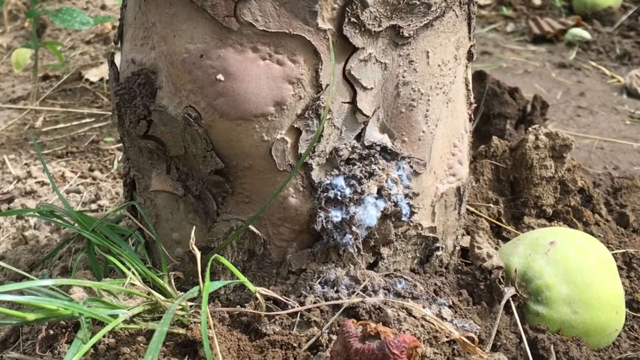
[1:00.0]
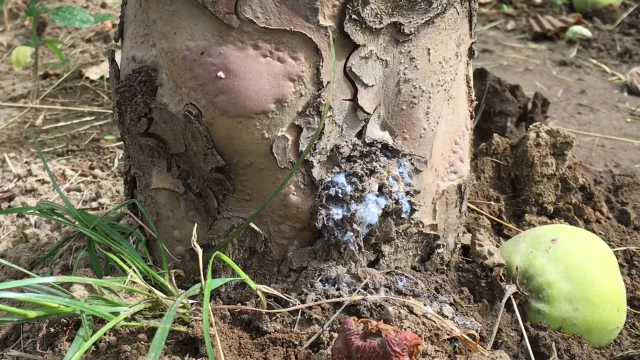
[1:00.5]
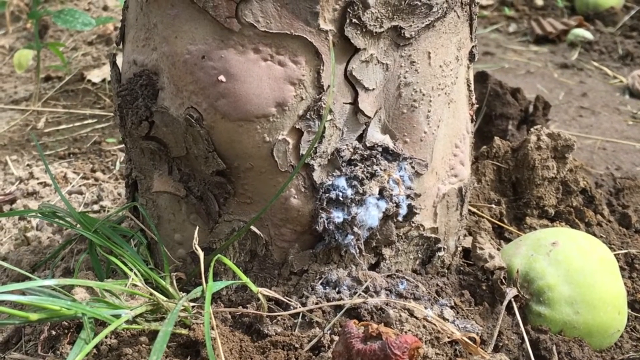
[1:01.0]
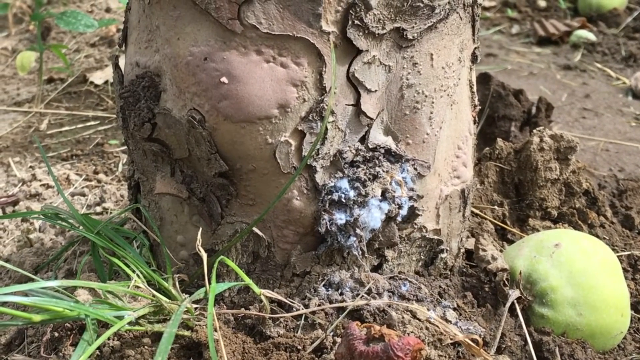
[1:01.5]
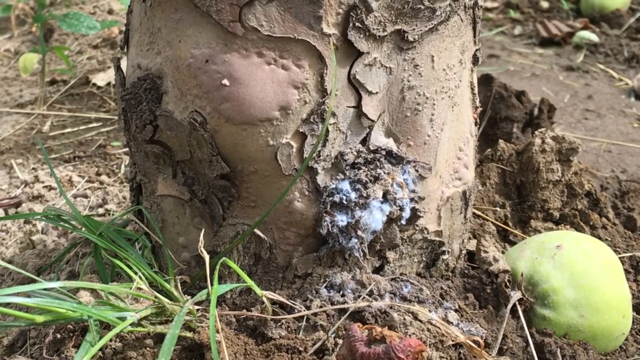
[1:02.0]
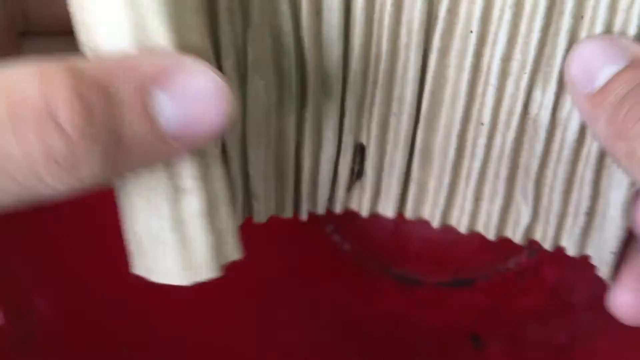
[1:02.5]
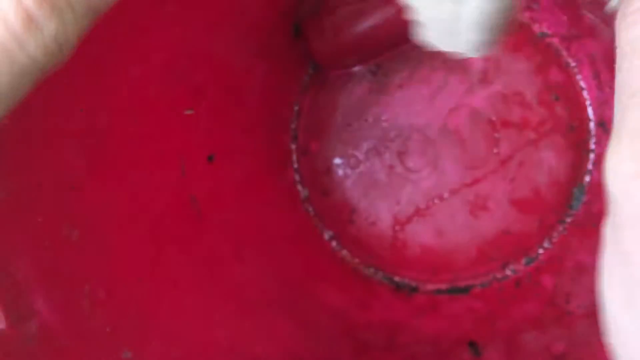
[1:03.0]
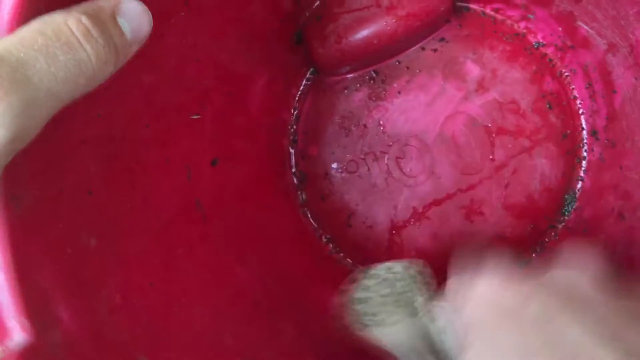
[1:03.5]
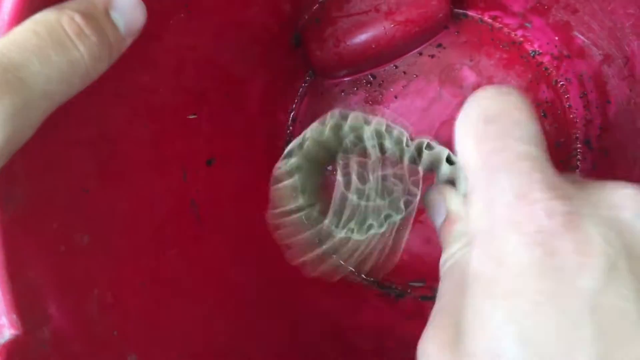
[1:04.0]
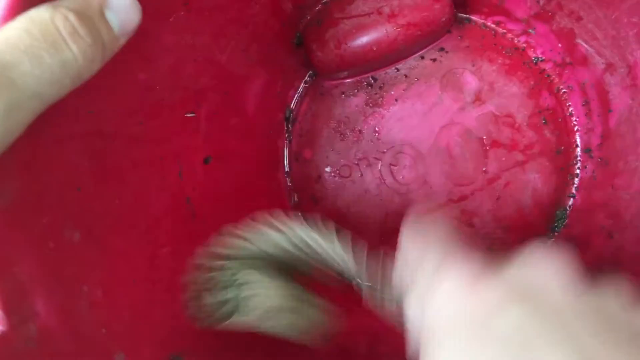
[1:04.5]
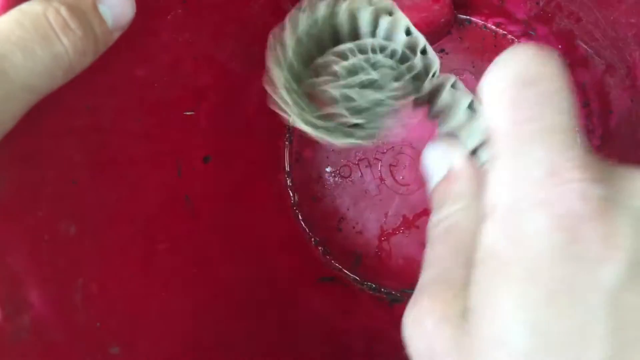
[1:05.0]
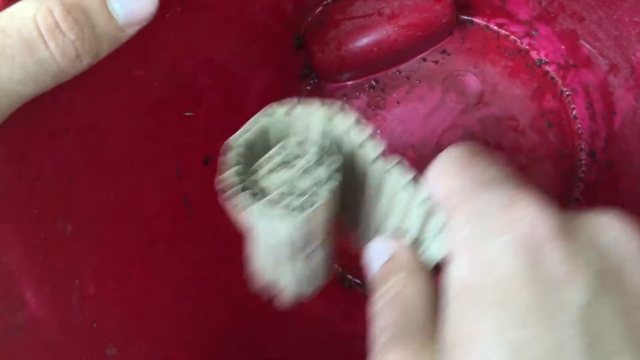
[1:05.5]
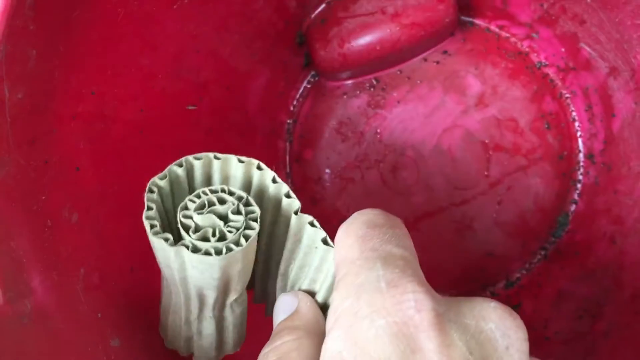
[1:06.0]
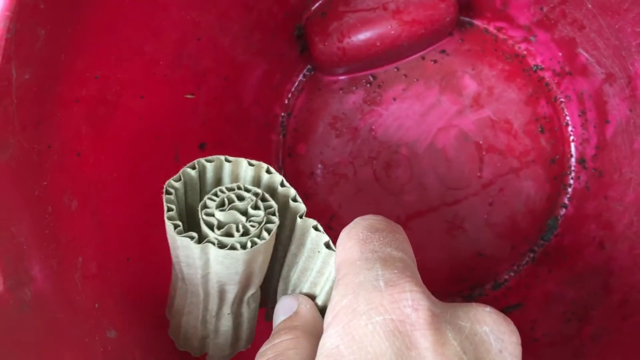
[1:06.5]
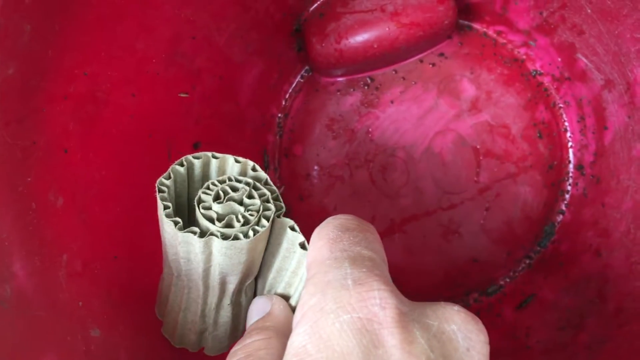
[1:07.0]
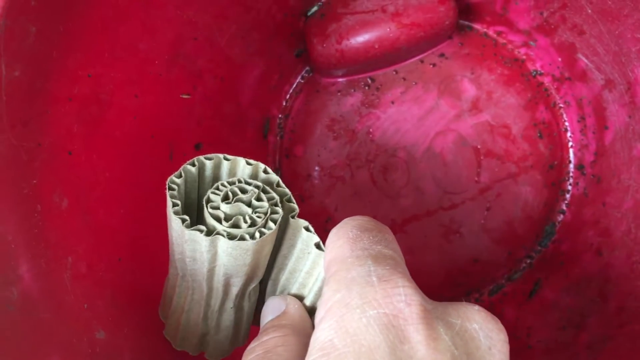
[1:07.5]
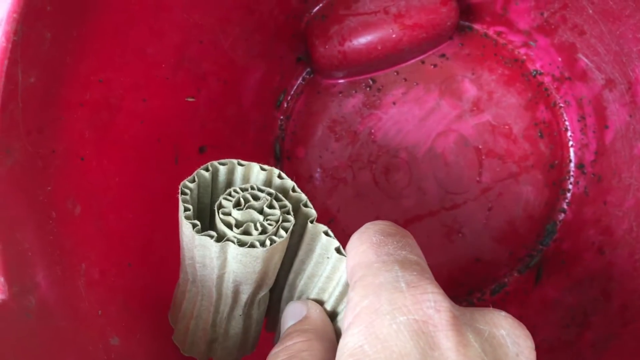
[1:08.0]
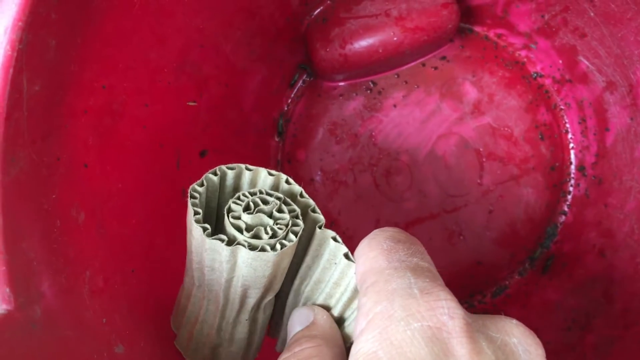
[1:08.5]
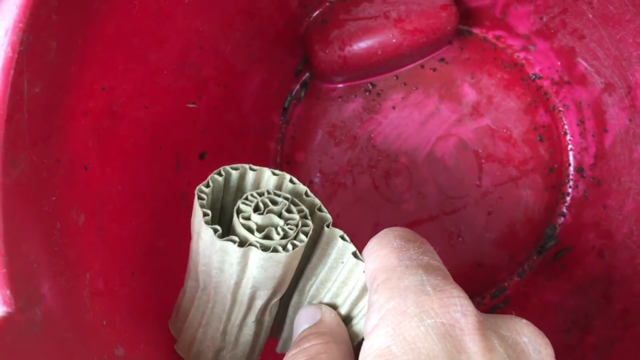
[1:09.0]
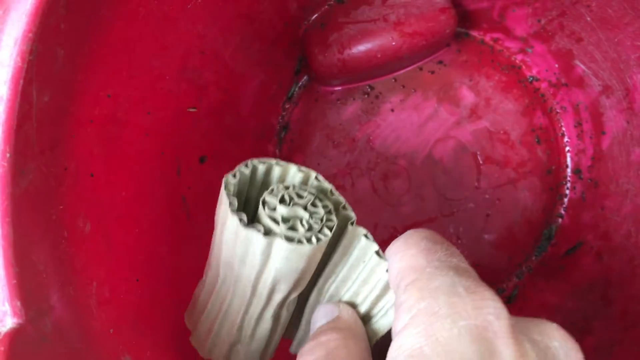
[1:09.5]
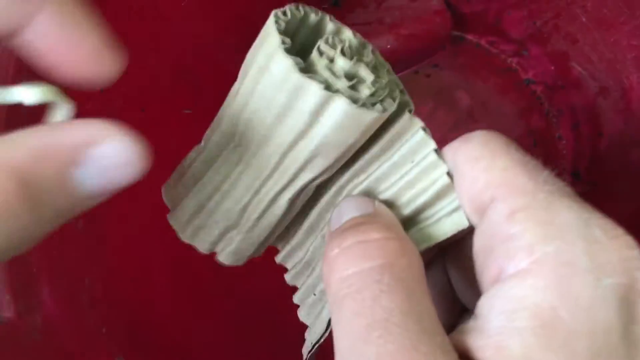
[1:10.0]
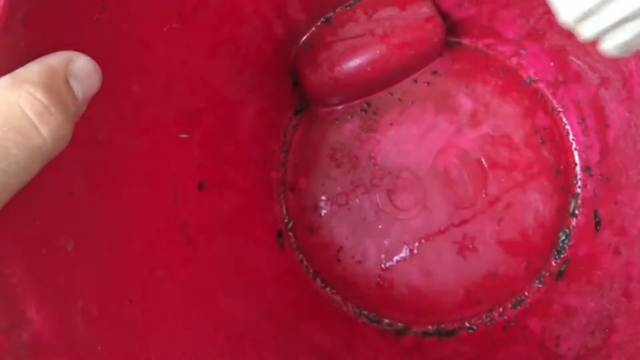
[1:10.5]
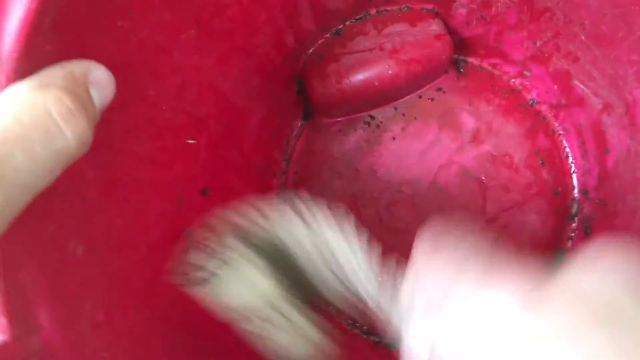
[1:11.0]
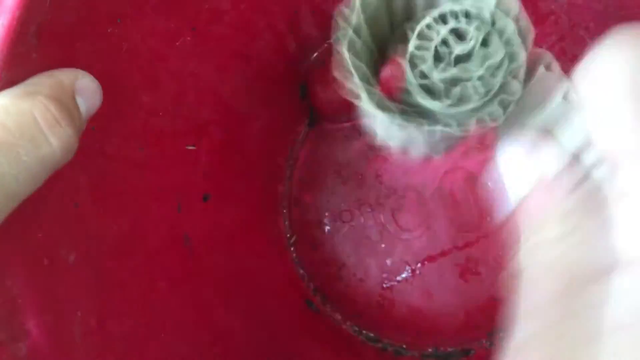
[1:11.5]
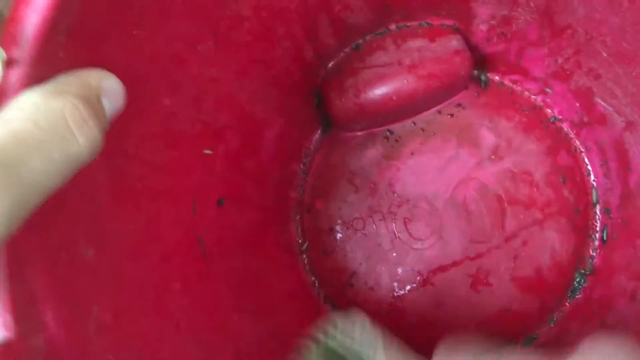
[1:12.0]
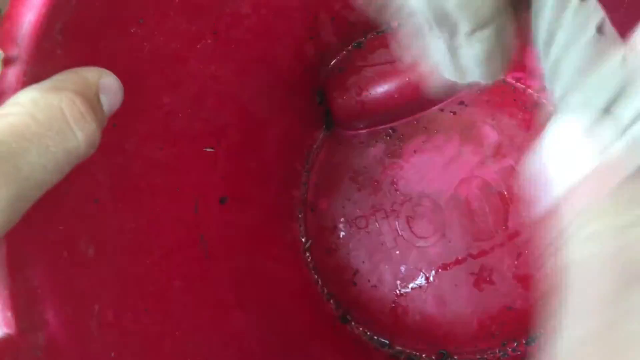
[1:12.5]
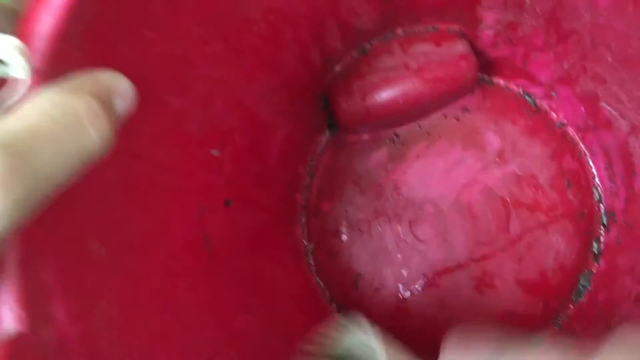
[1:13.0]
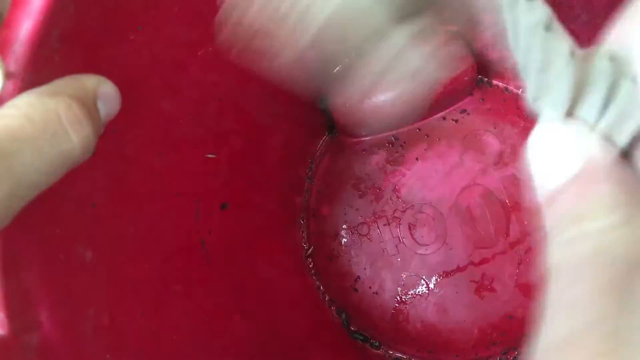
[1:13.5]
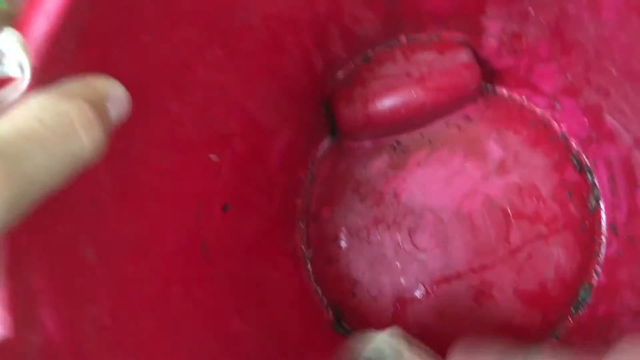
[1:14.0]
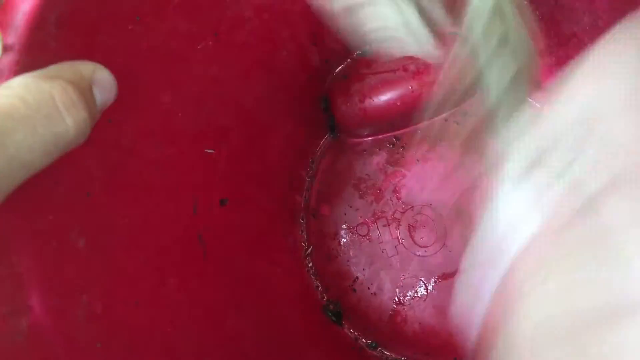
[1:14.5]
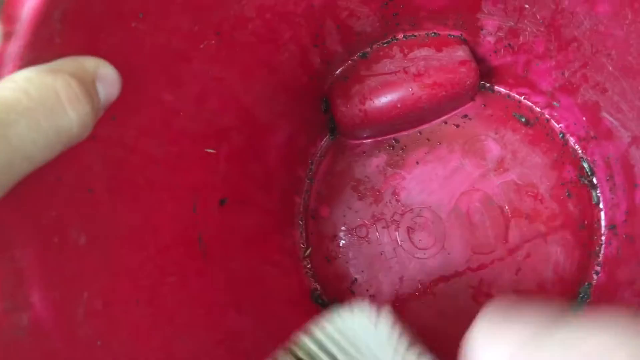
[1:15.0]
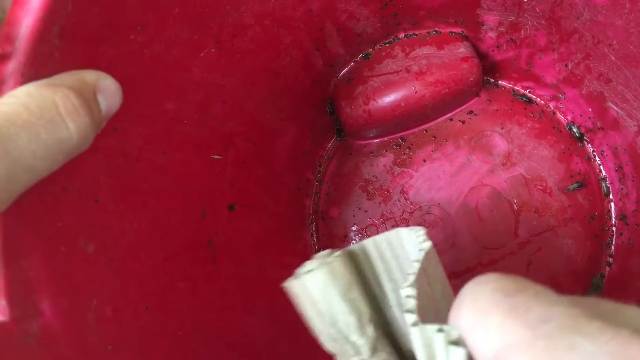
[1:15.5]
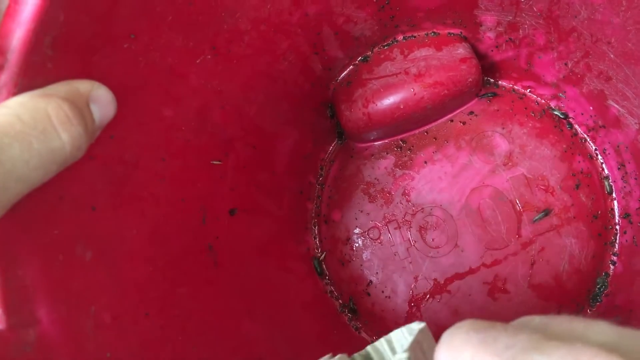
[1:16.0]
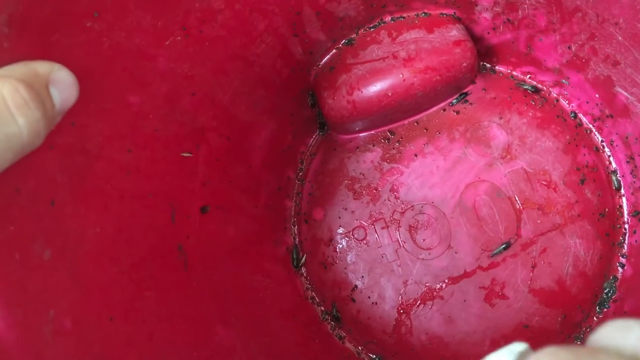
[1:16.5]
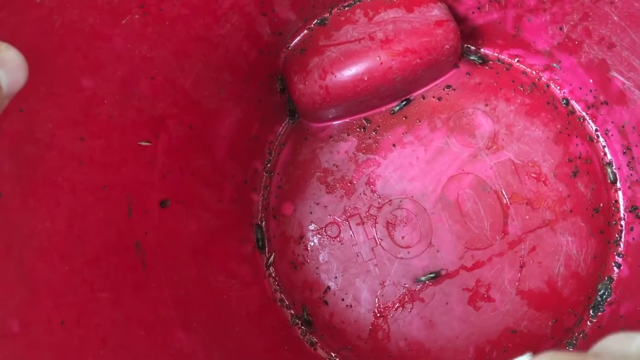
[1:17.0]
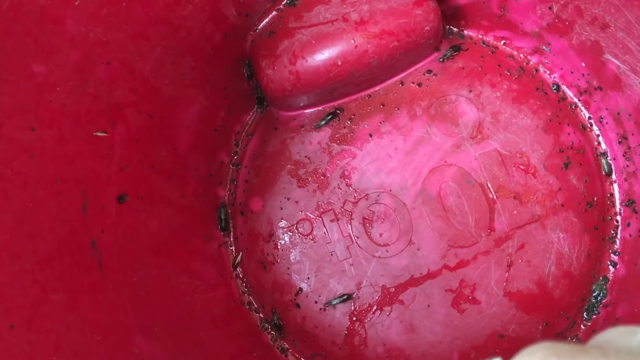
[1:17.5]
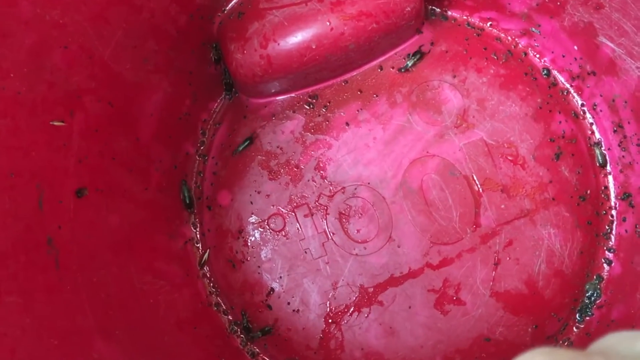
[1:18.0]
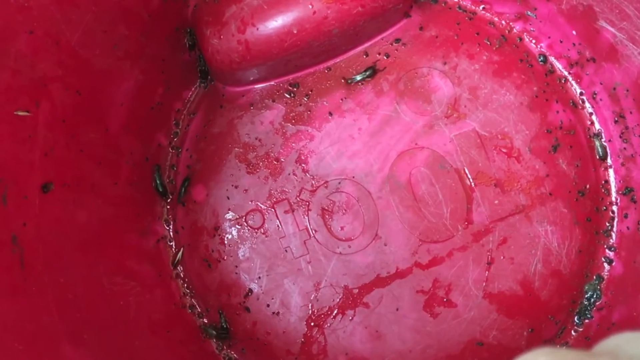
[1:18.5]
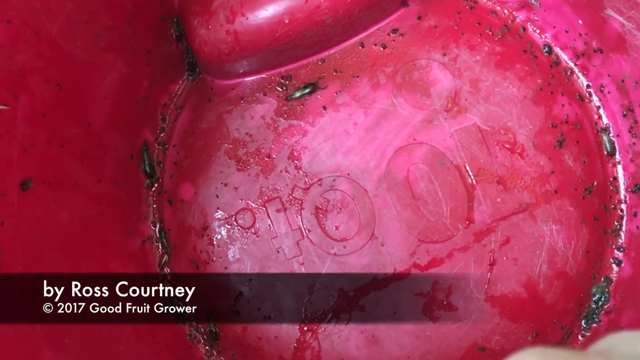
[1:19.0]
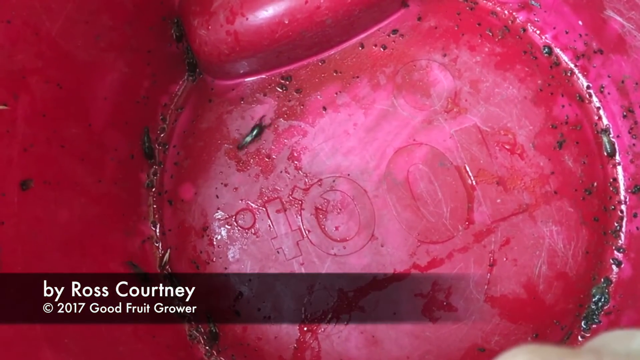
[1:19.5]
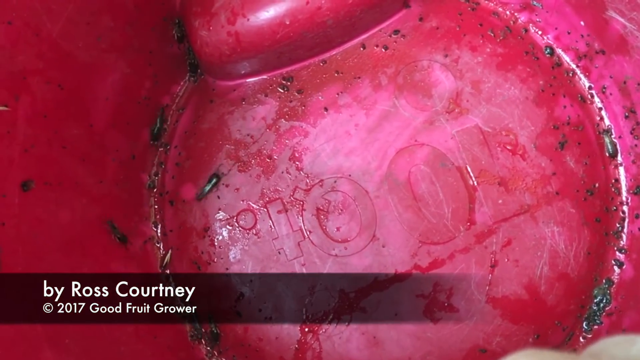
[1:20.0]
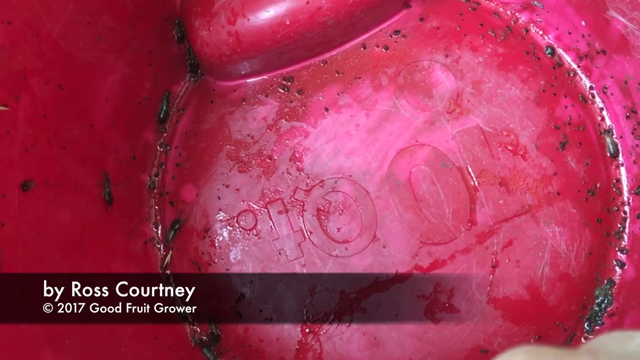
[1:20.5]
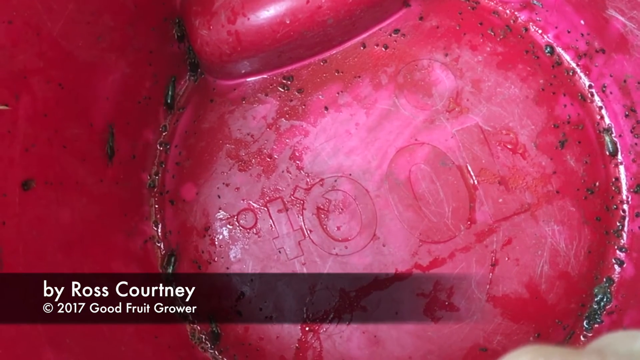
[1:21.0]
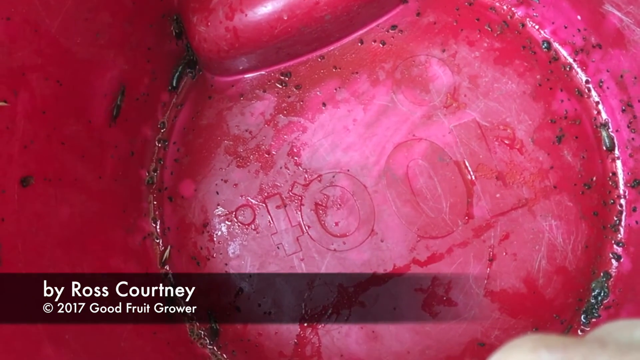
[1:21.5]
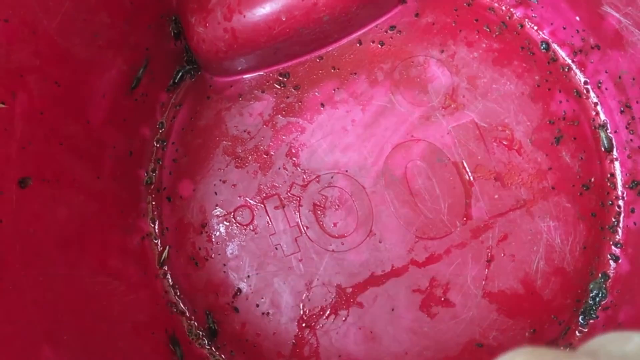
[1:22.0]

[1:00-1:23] The shot lingers for some time on the base of the tree and the apparent mould before cutting to a view looking down inside a red bucket. The thumb of a left hand holding the bucket is in the top left corner, and a right hand holds a piece of concertina cardboard rolled up into a tube, which is hit against the bottom of the bucket. The action stops, and small insects run up the base of the bucket as if deposited from the cardboard. The action is repeated, smacking the cardboard against the side of the bucket at the bottom of the shot as if to release more insects. It stops, and the camera zooms in to the bottom of the bucket, where the creatures move around. A horizontal black shaded area appears at the bottom of the screen with white writing that says 'By Ross Courtney, ©2017, Good Fruit Grower'. The shot remains for several seconds before fading to black.